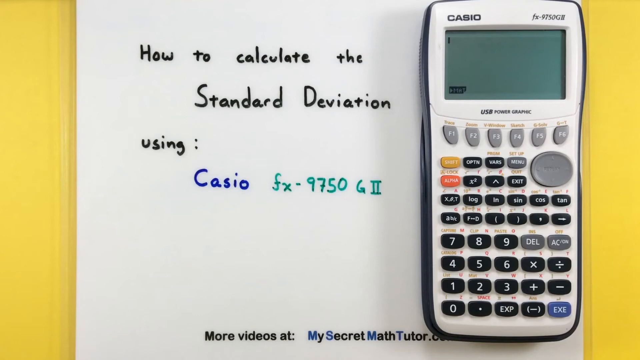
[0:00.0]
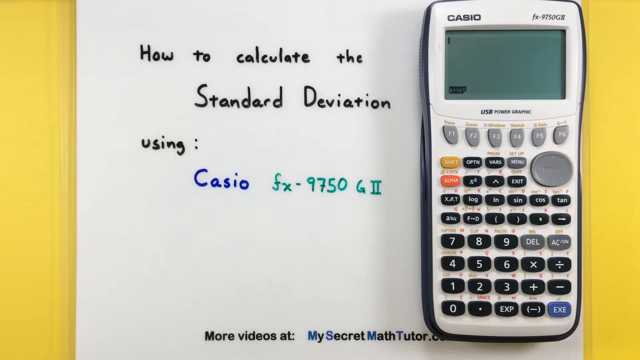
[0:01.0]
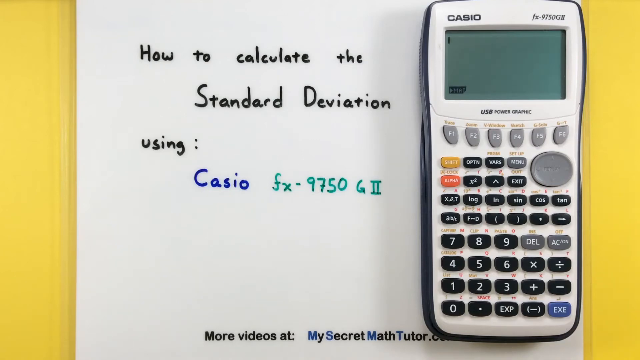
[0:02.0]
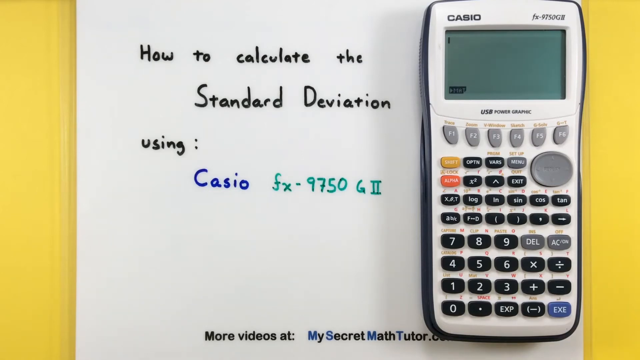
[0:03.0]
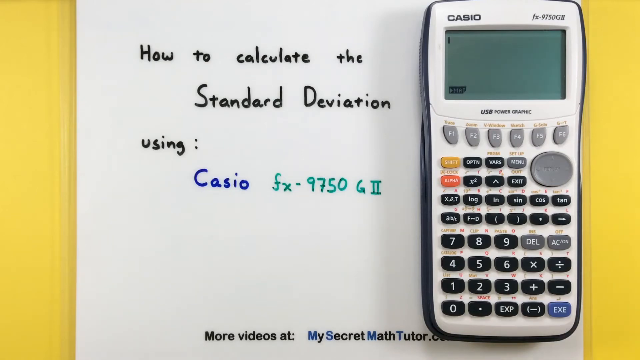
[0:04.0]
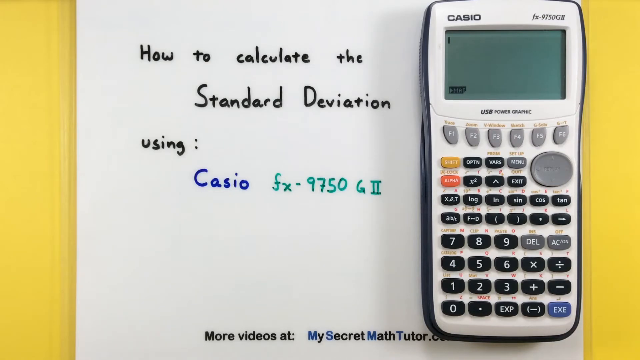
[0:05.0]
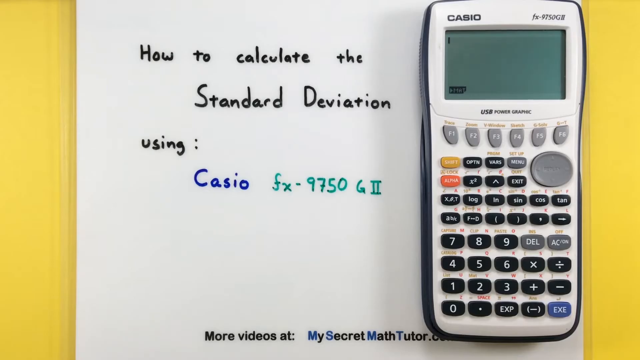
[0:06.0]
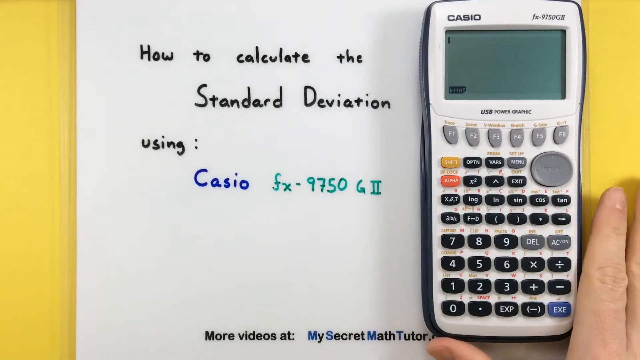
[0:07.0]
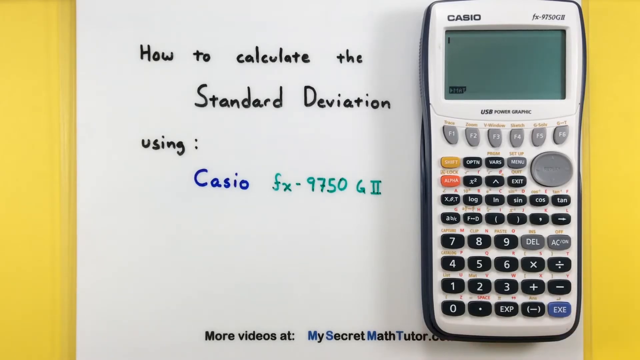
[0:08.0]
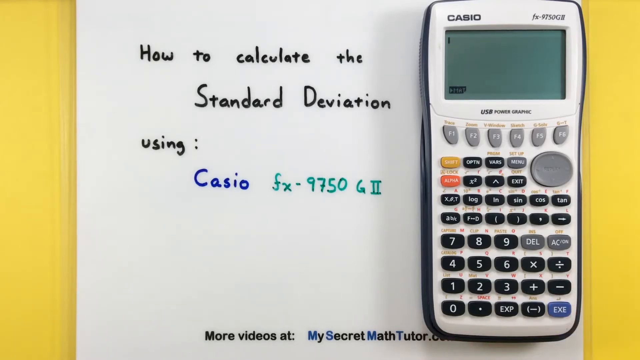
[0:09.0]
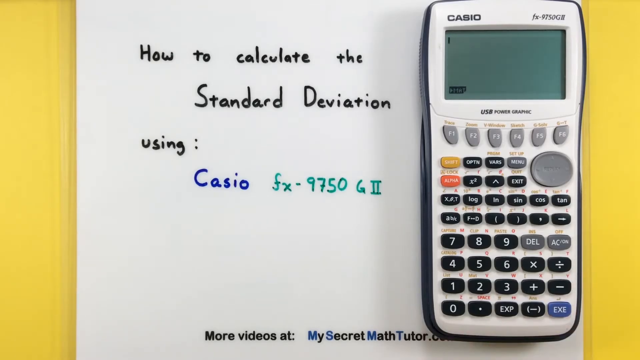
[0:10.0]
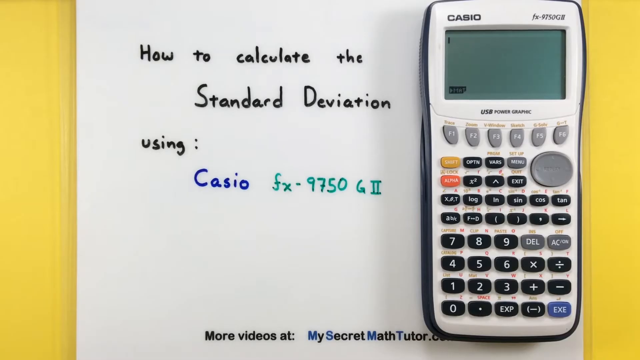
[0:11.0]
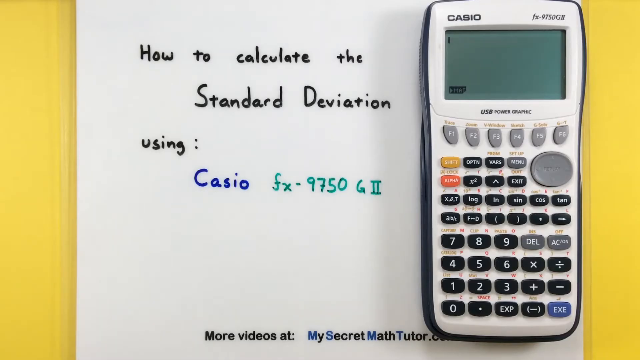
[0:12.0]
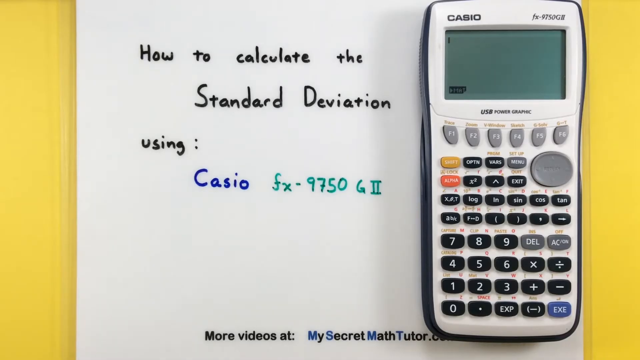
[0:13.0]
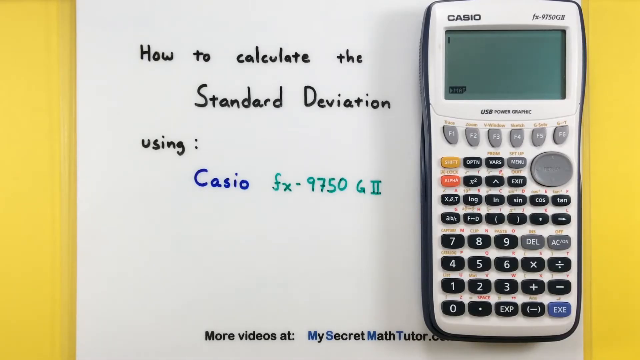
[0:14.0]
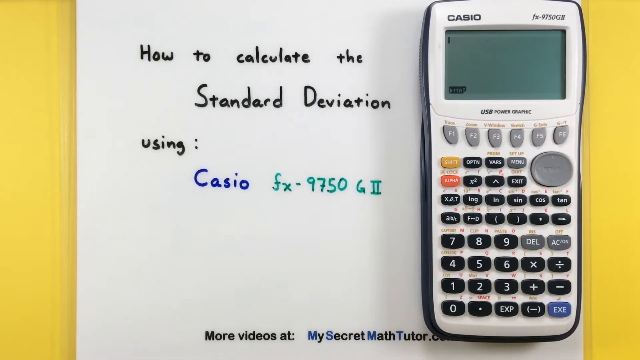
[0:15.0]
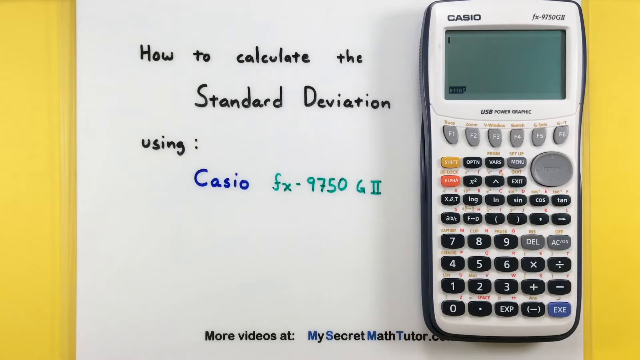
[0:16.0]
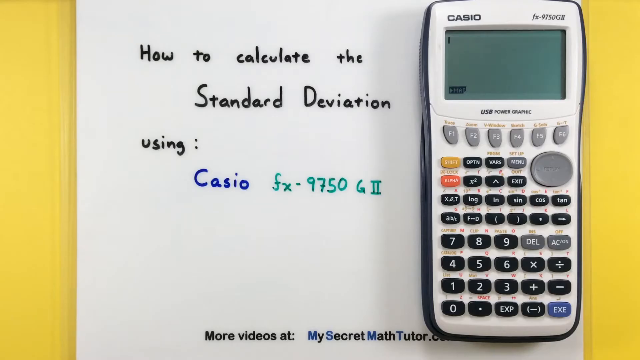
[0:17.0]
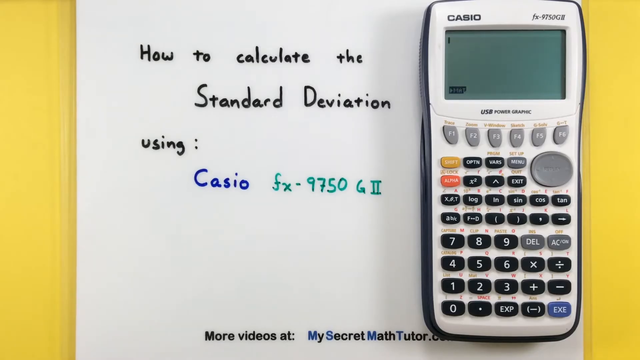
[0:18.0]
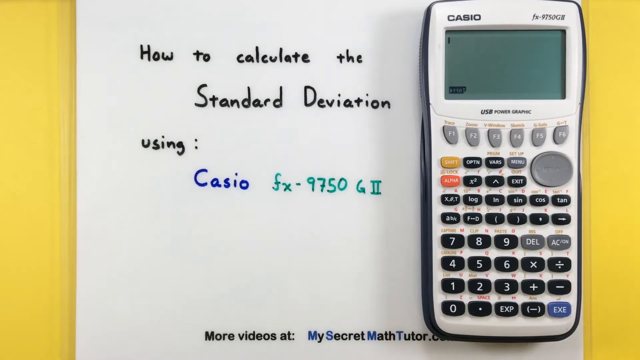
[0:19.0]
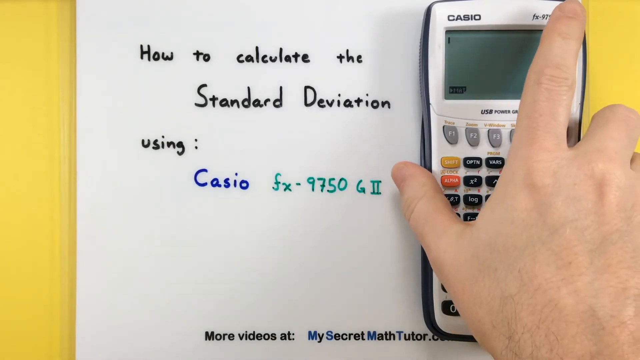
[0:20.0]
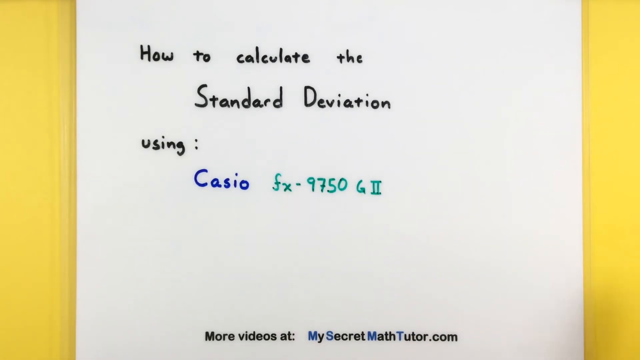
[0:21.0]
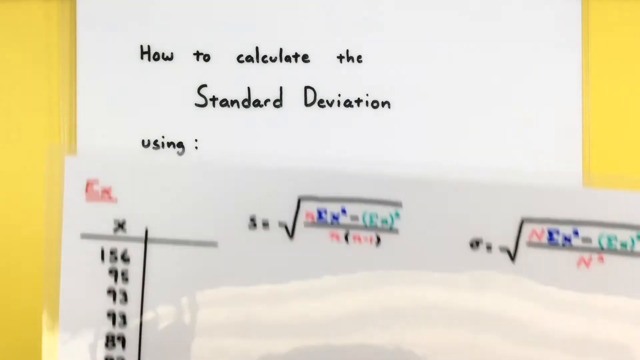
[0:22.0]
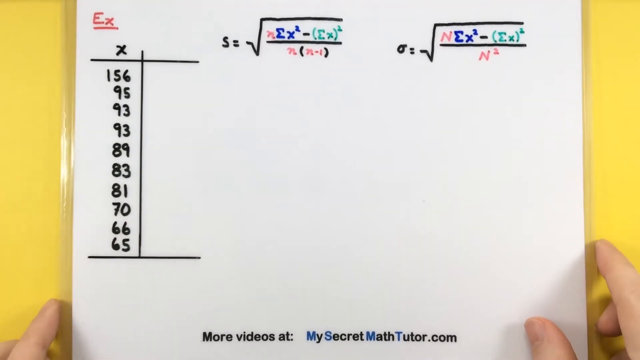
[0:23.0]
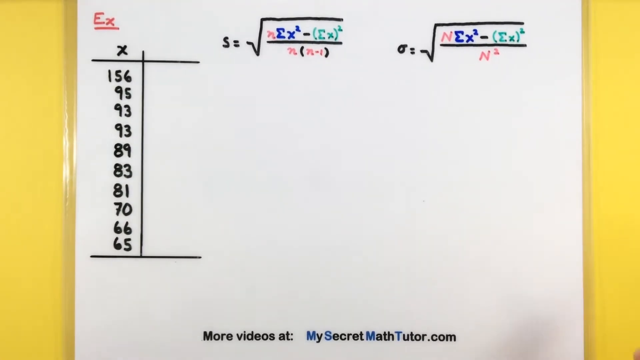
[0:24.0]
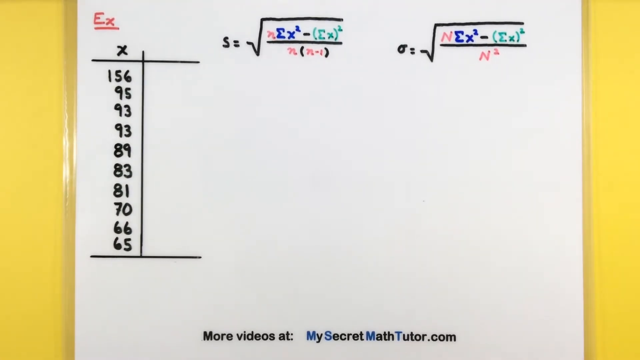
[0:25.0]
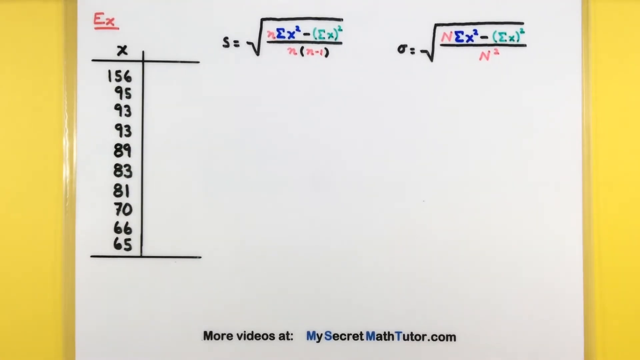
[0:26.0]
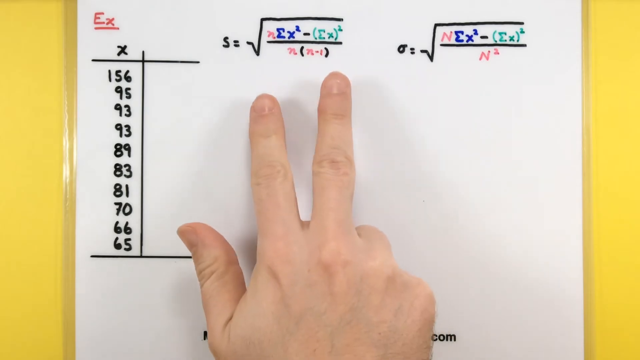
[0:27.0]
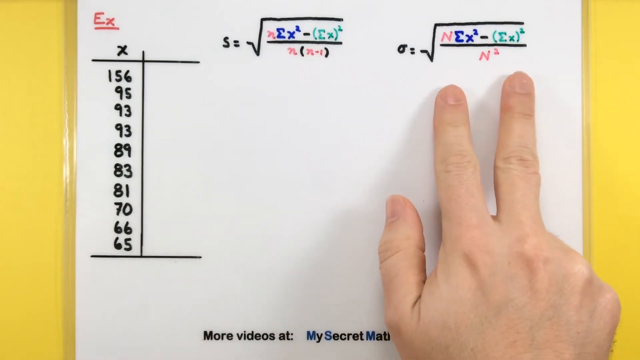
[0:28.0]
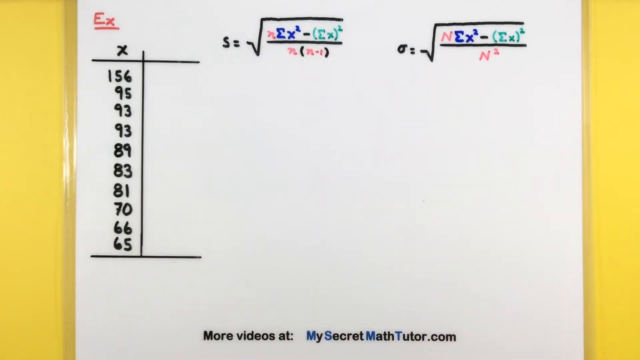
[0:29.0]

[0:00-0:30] The video opens on a yellow desk with a paper on it and a Casio calculator on top of the paper. Words are written on the paper in marker. In black ink it says "how to calculate the standard deviation using:"; the next word, in blue, is "Casio"; the next words, in green, are "FX-N750G", with two written in Roman numerals. On the right side is the calculator, which is white with a bluish back and is on top of its lid. The calculator is turned on. A hand briefly appears in the bottom right corner, grabs the calculator and moves it out of the way, then plops down another piece of paper. This paper is laminated and provides various calculations.